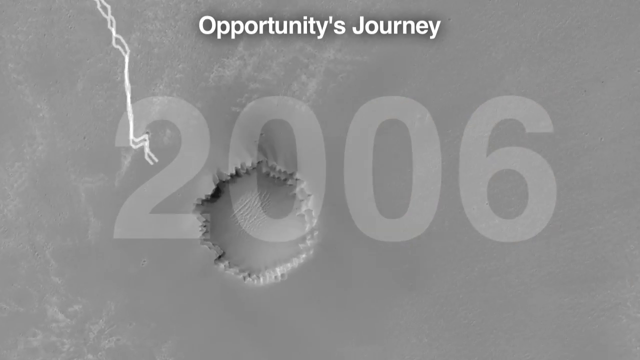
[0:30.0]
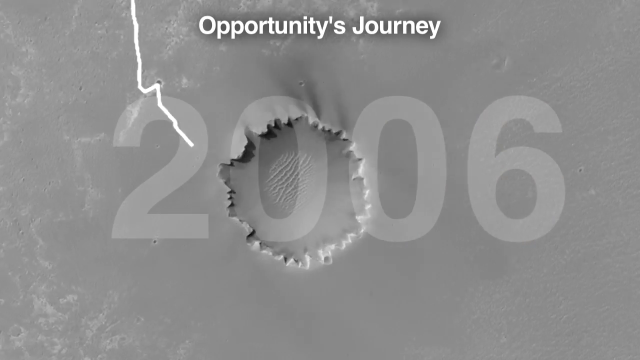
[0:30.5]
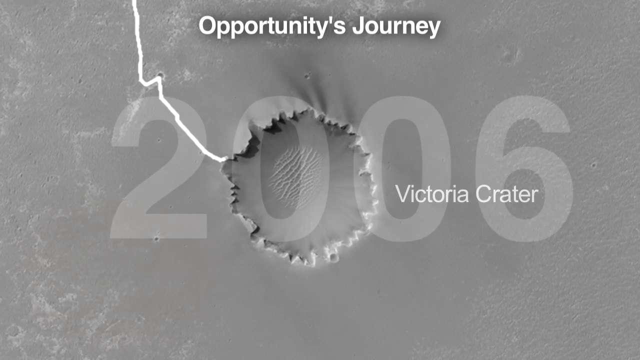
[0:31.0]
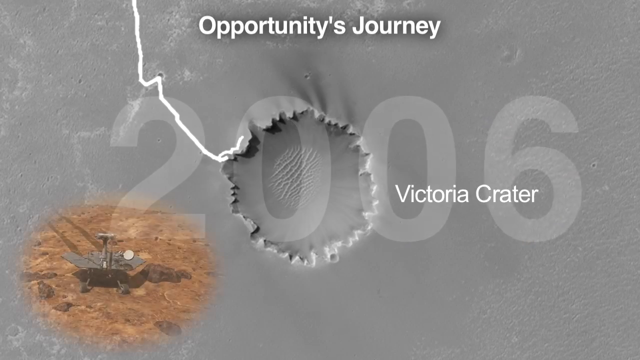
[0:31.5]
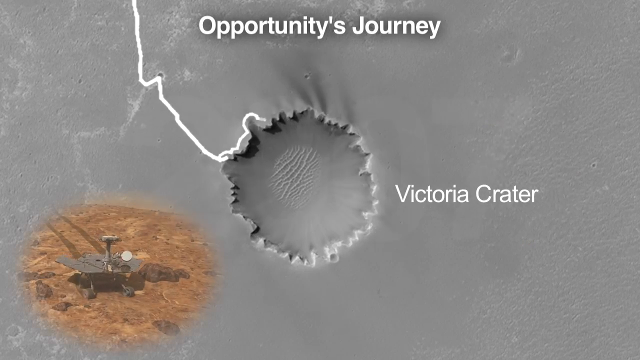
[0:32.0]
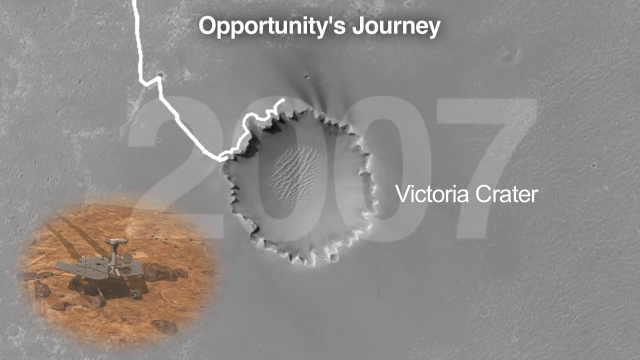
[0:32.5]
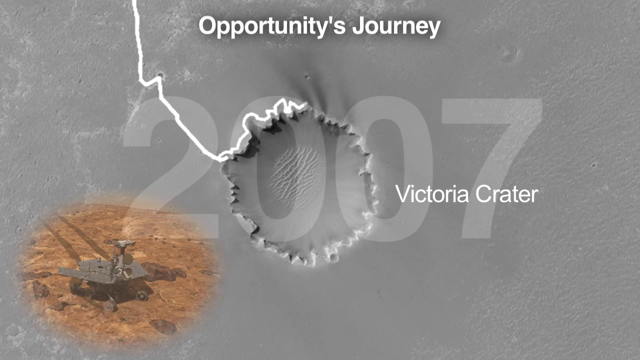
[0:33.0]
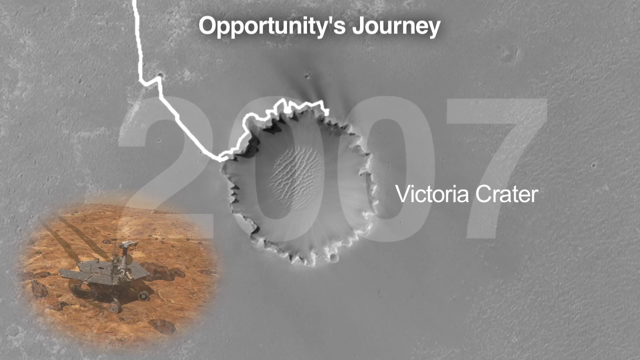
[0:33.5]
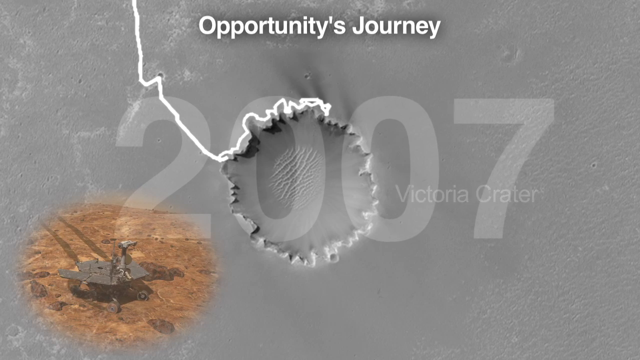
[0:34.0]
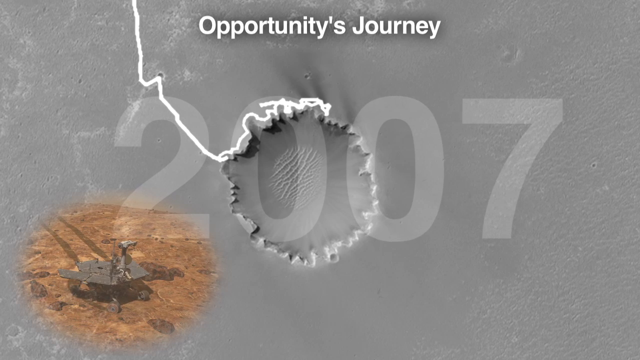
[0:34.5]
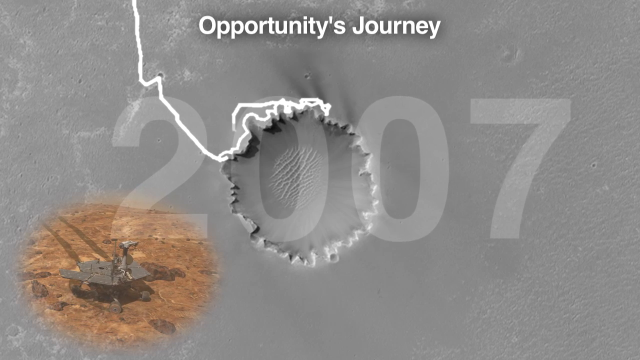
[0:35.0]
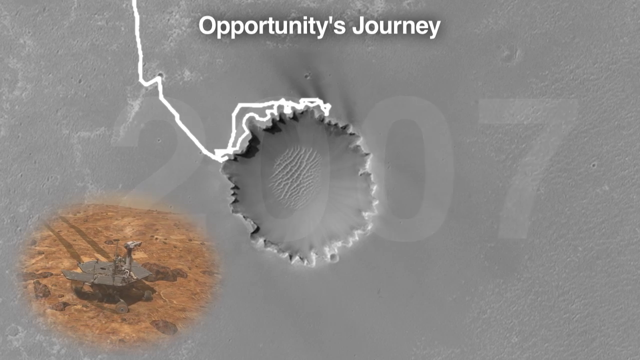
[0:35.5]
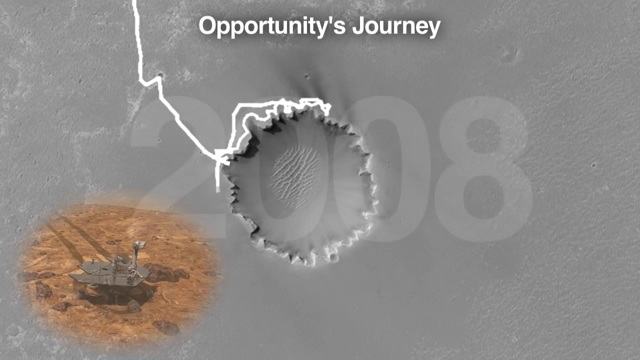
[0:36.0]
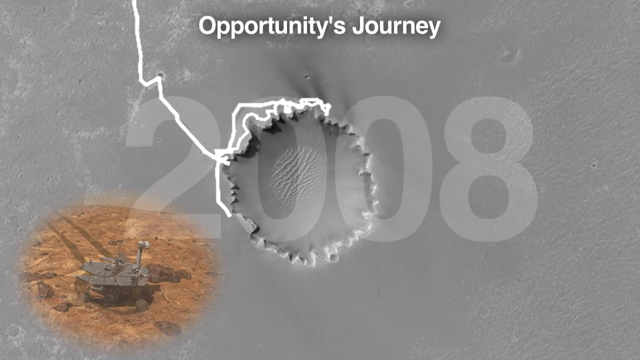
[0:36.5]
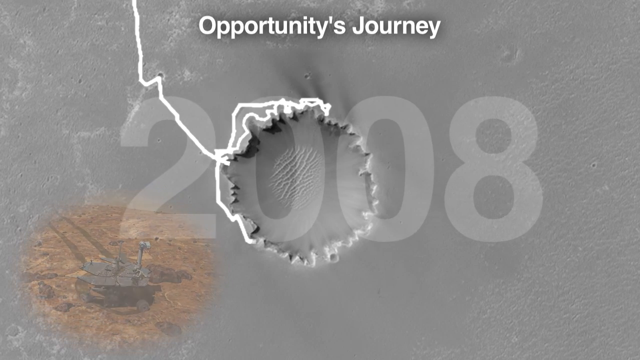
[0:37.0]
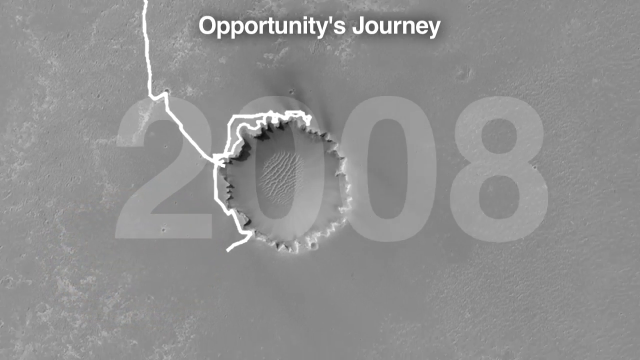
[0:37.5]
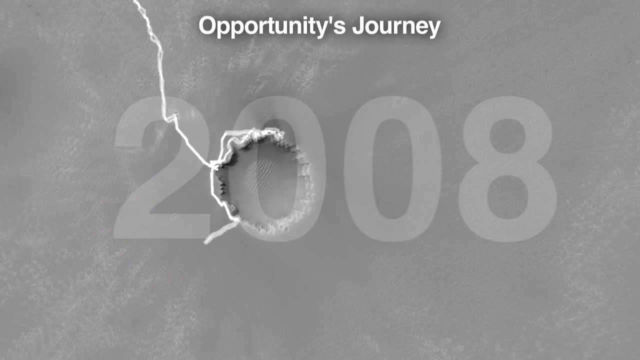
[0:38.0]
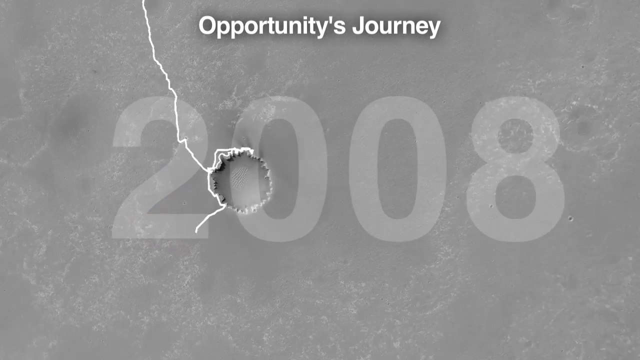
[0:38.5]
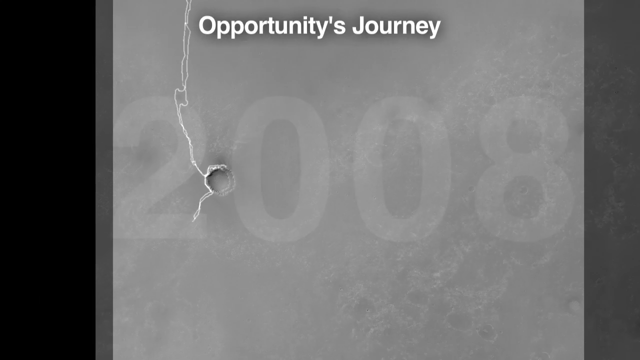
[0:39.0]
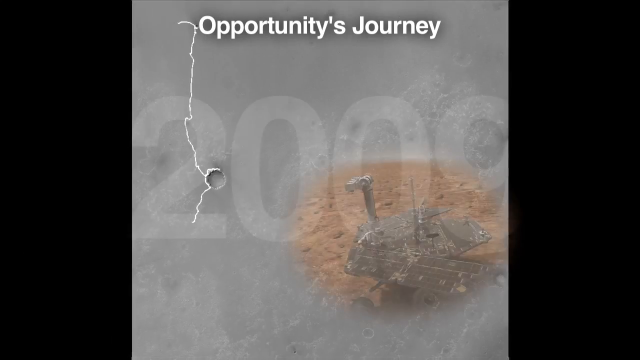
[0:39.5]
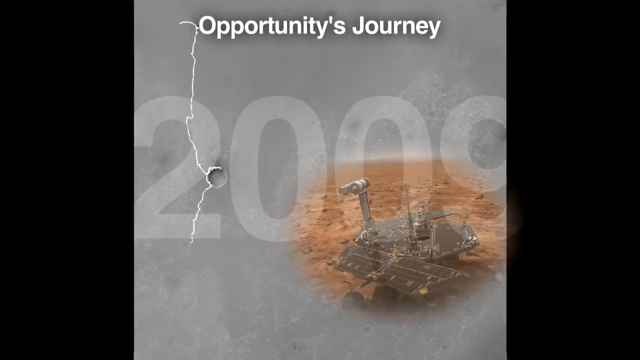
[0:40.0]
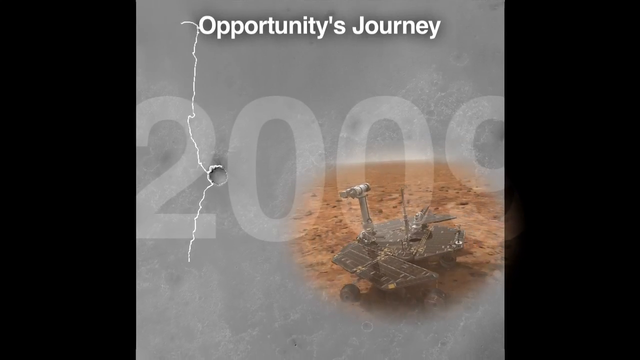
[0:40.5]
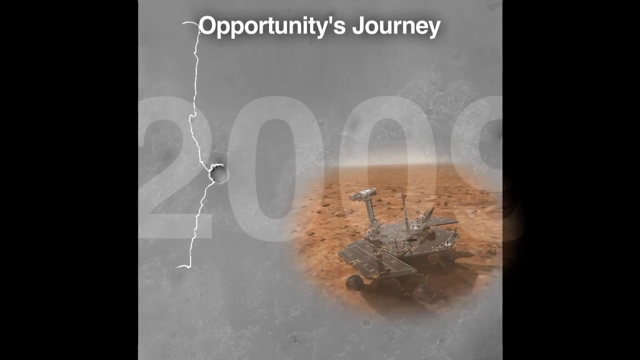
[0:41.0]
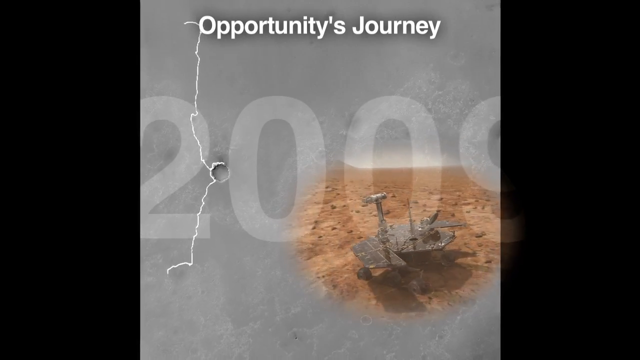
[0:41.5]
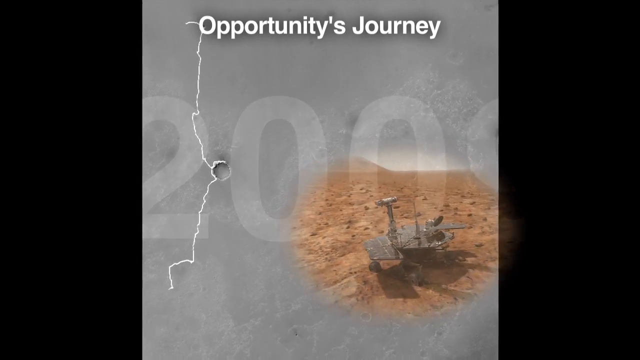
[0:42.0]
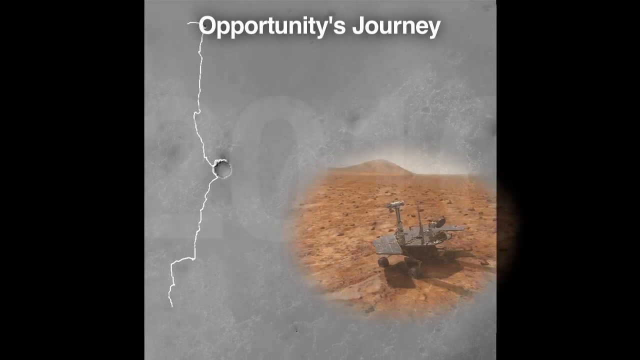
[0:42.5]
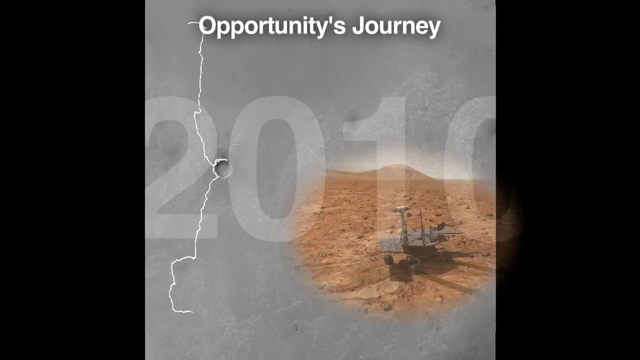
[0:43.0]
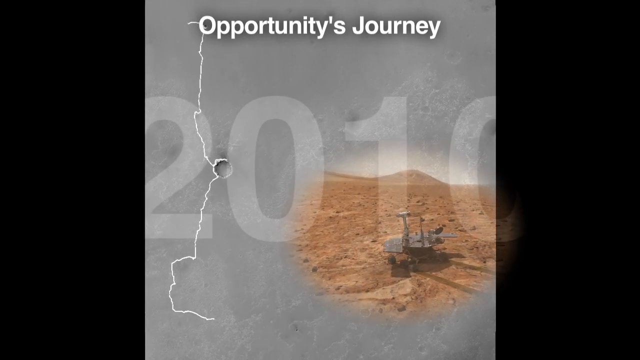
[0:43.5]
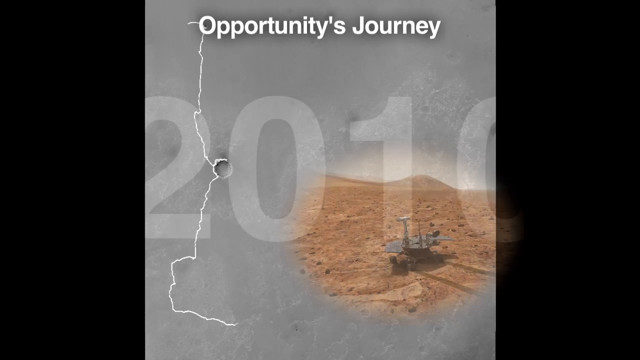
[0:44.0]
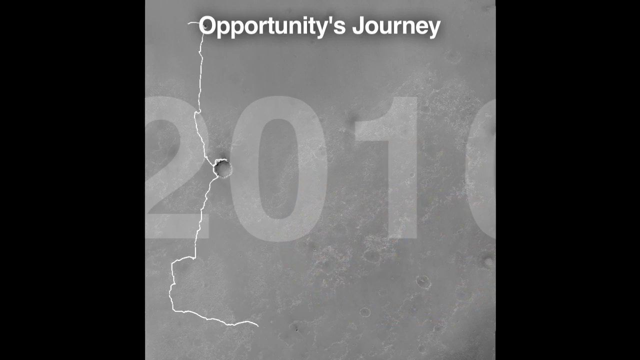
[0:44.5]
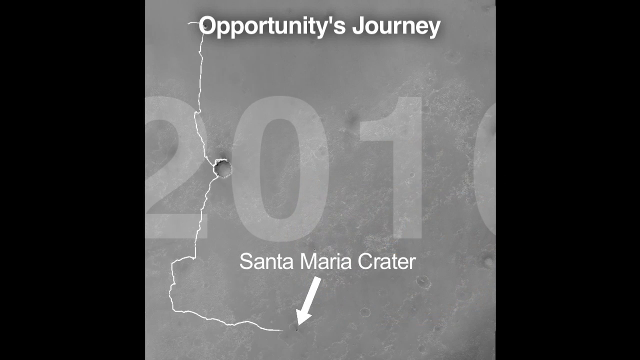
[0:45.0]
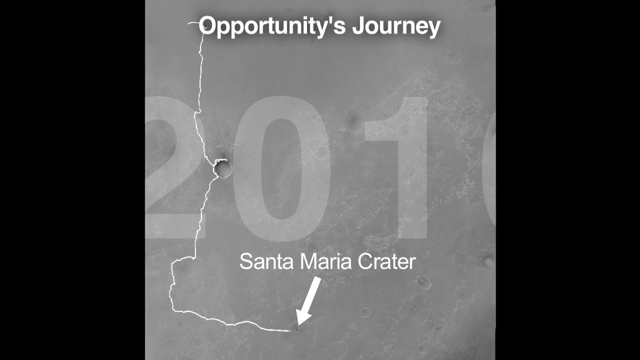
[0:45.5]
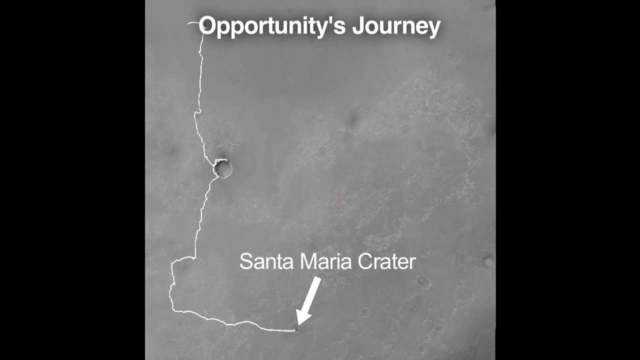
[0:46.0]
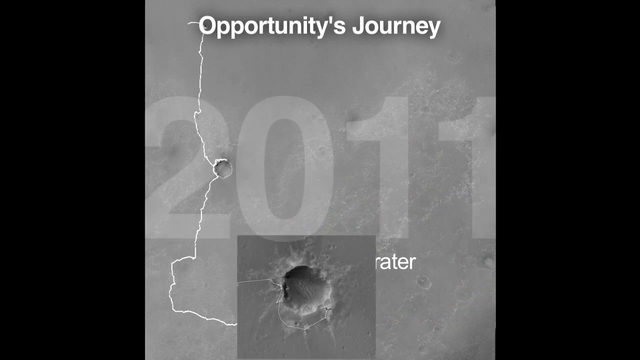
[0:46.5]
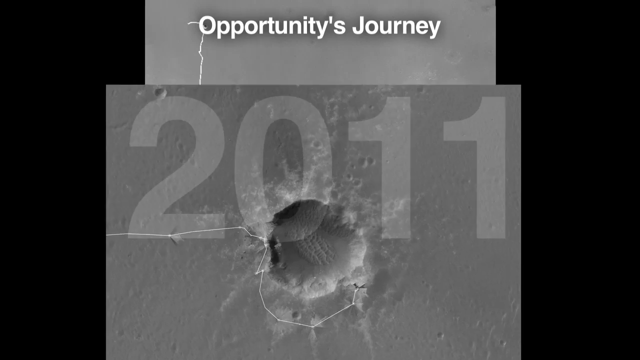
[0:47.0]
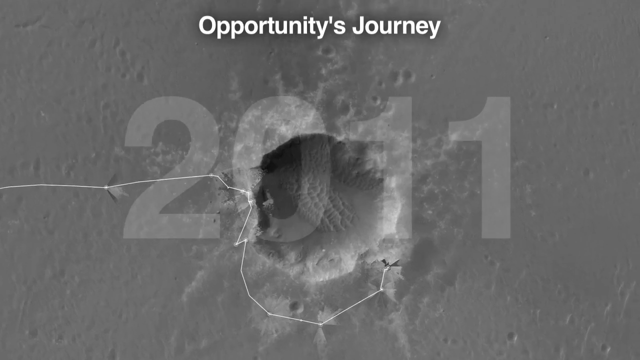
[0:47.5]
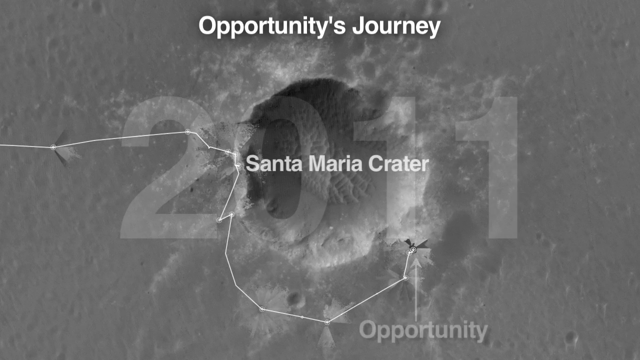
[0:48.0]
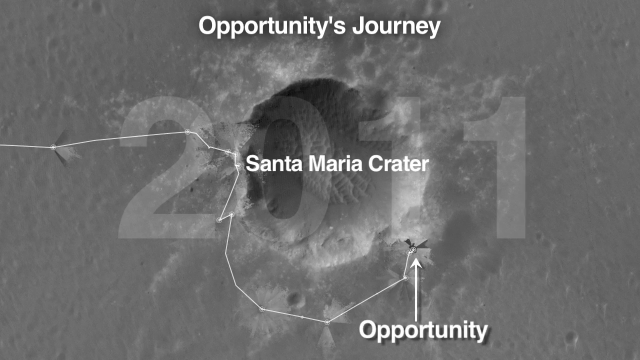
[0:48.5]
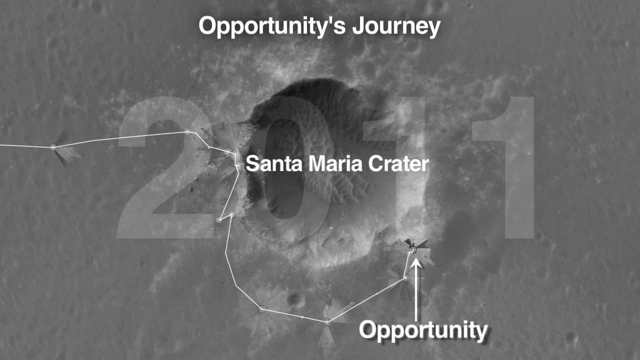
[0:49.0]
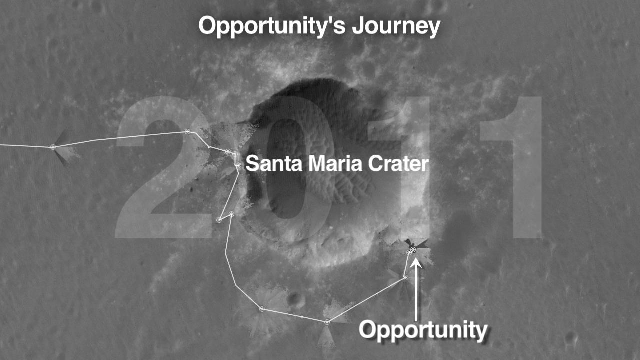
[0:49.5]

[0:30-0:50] "Opportunity's journey" appears at the top and "2006" across the center of the screen. In the background is almost a planet of some sort, seen from far out, and the view zooms in. There looks to be a crater in the center of the planet. A white line comes from the top and starts outlining this crater area in the center of the screen, and white text towards the right reads "Victoria Crater". In the lower left-hand side is a small inset photograph of brown, dirty ground with a device that looks to be sitting or traveling on it. "2007" slowly expands, then disappears and changes to "2008". The view zooms way out, and the device moves from the lower left-hand side of the screen to the lower right-hand side, on a desolate planet or ground area, with the device moving towards its left. A different screen then pops up, almost like a PowerPoint slide, now reading "2011". The same crater is still shown, with the camera zooming in on it, and "Santa Maria Crater" appears across the center. A white line leads up to the crater and, once it reaches it, goes around it.